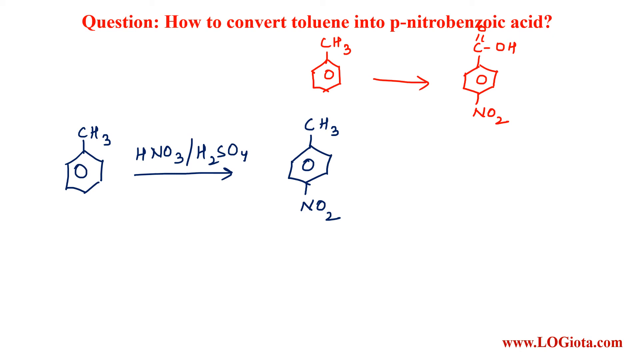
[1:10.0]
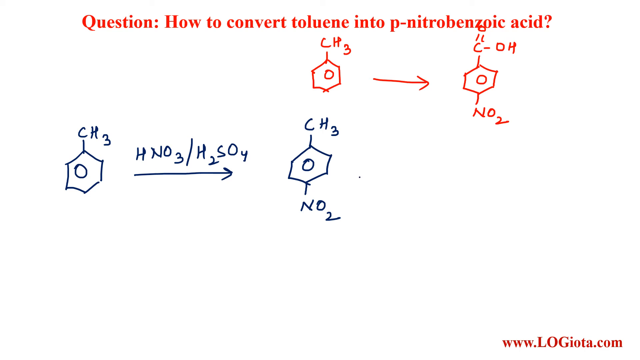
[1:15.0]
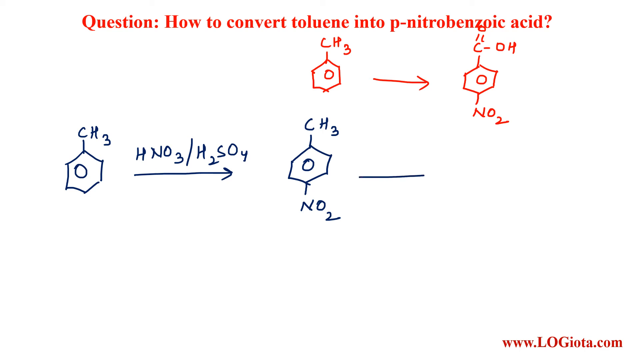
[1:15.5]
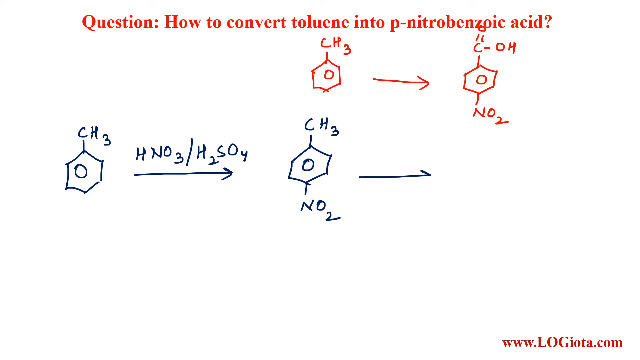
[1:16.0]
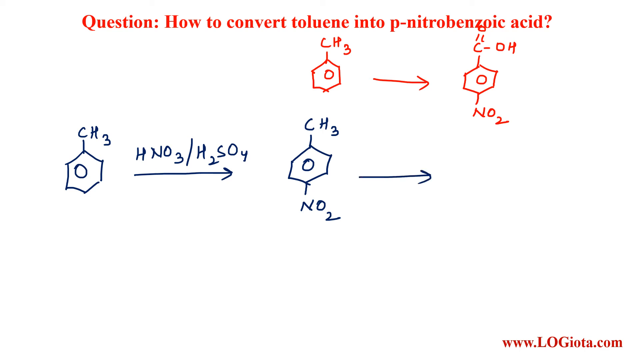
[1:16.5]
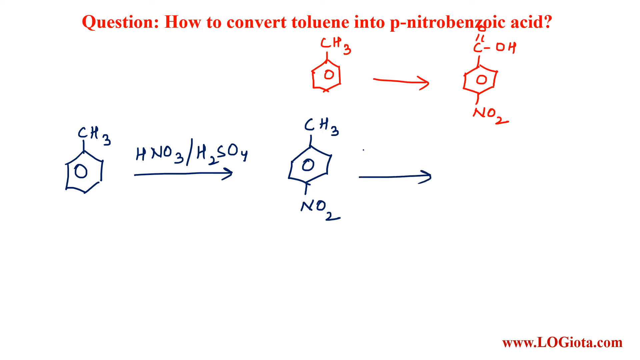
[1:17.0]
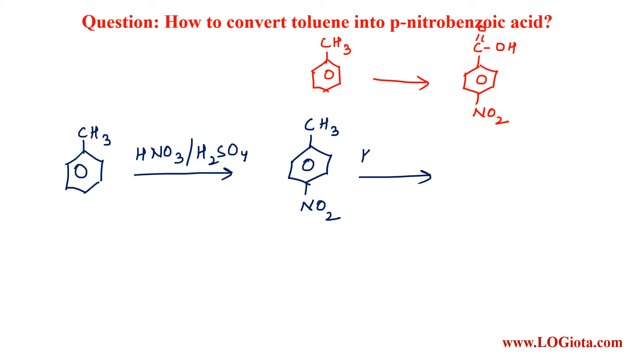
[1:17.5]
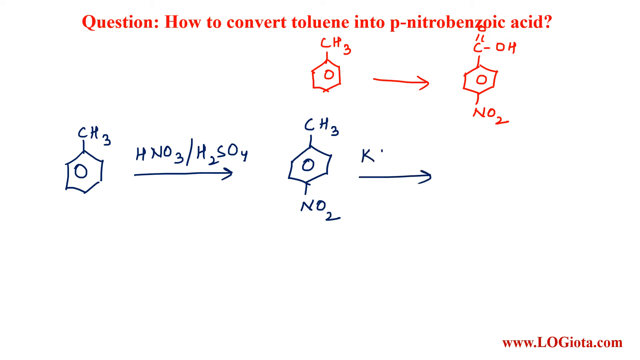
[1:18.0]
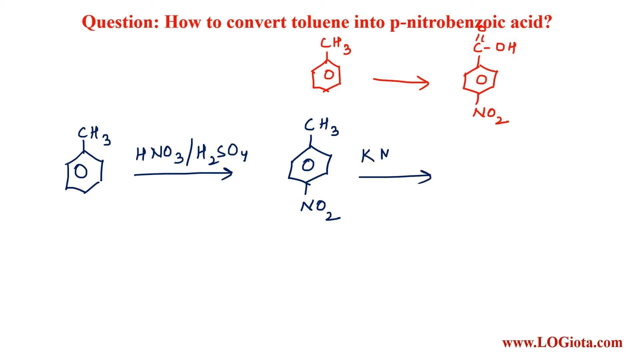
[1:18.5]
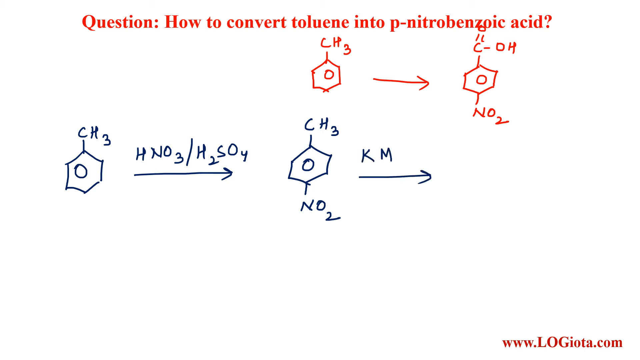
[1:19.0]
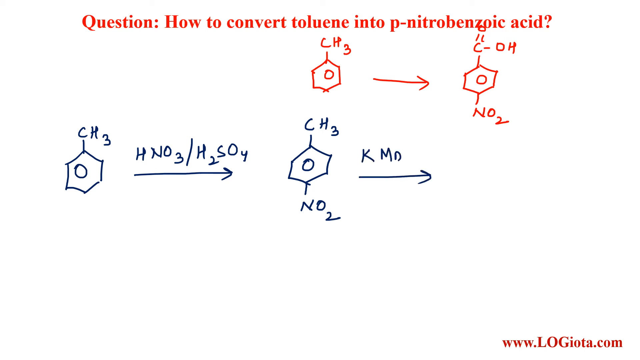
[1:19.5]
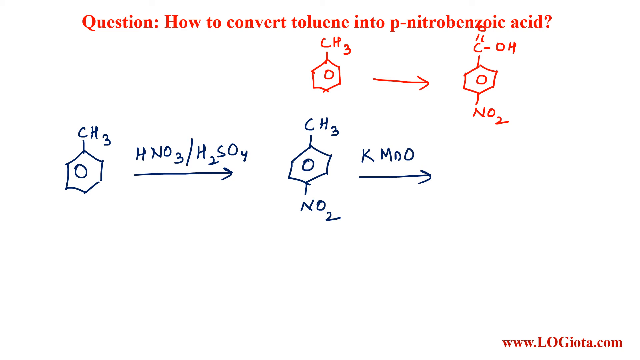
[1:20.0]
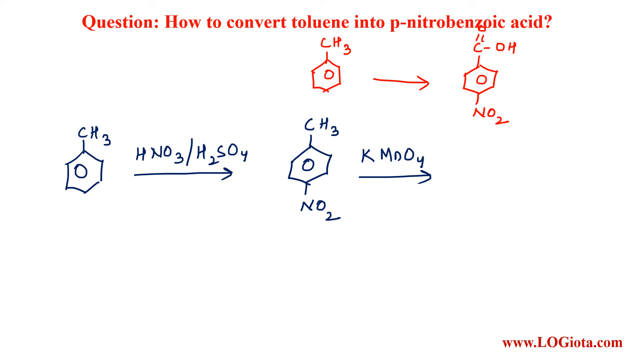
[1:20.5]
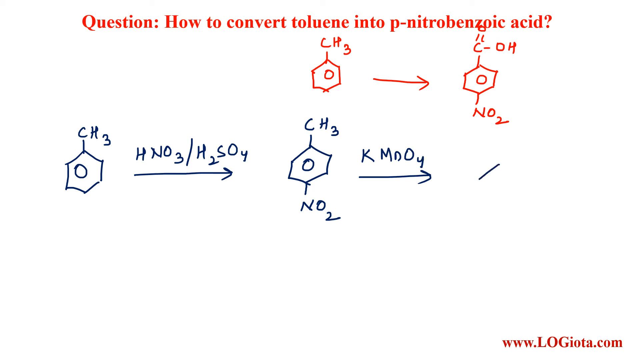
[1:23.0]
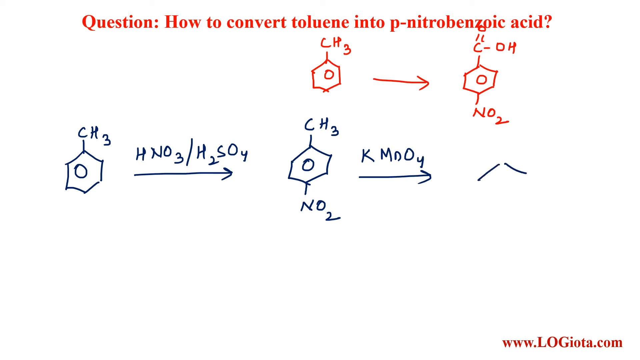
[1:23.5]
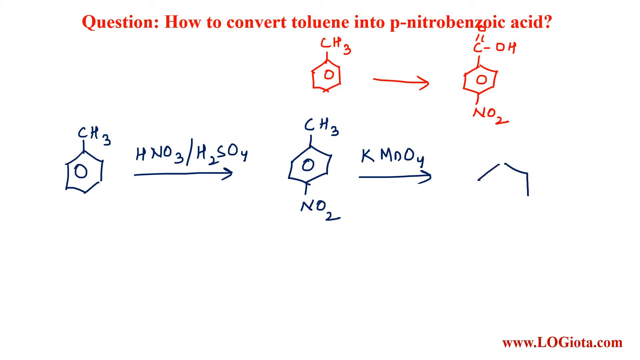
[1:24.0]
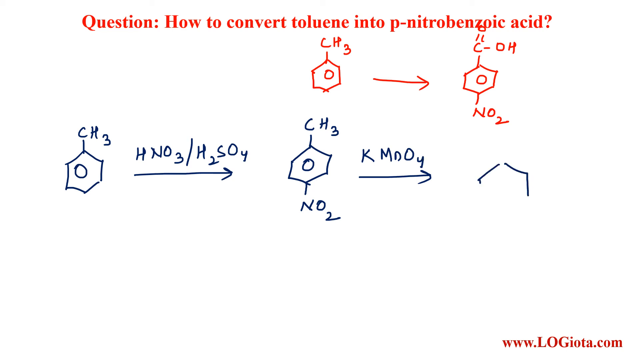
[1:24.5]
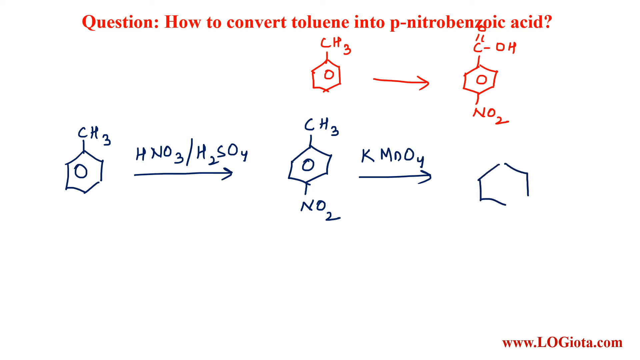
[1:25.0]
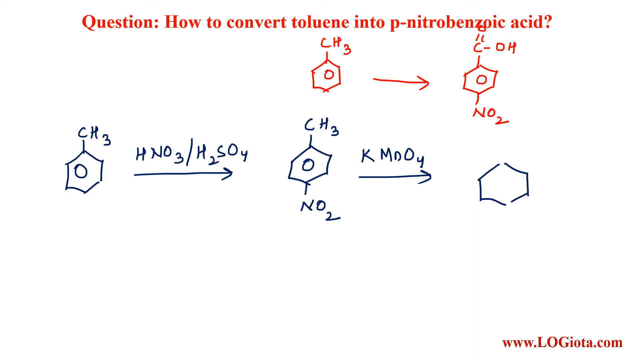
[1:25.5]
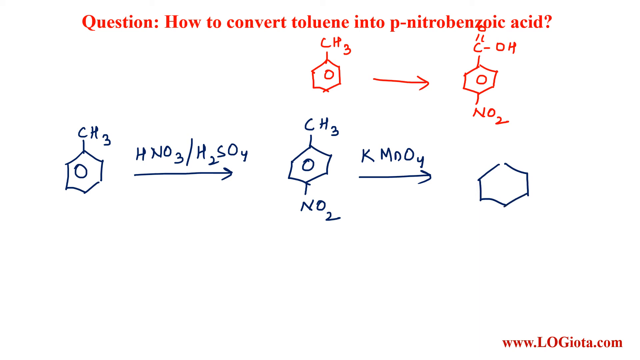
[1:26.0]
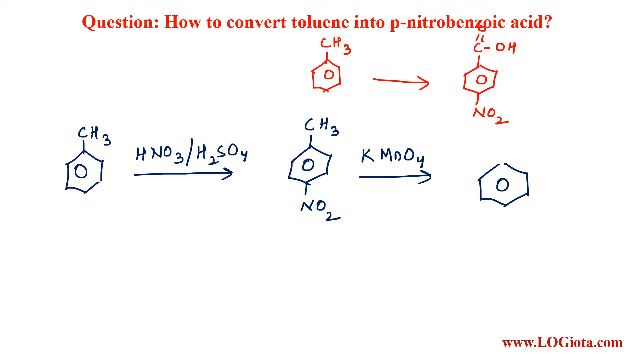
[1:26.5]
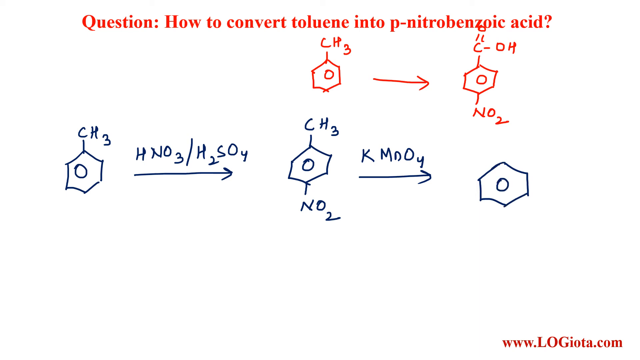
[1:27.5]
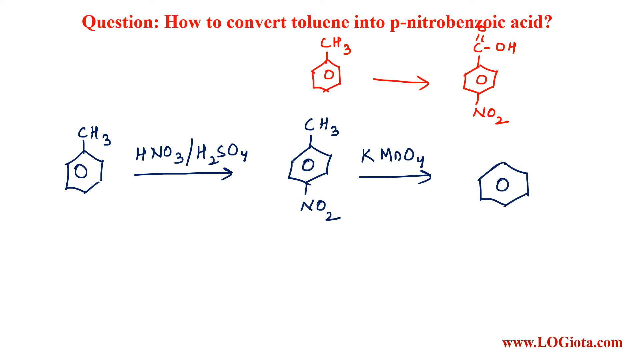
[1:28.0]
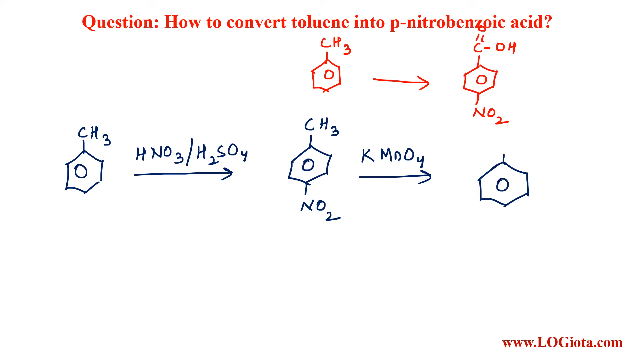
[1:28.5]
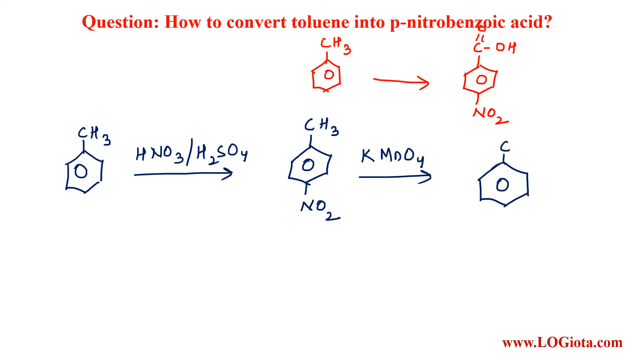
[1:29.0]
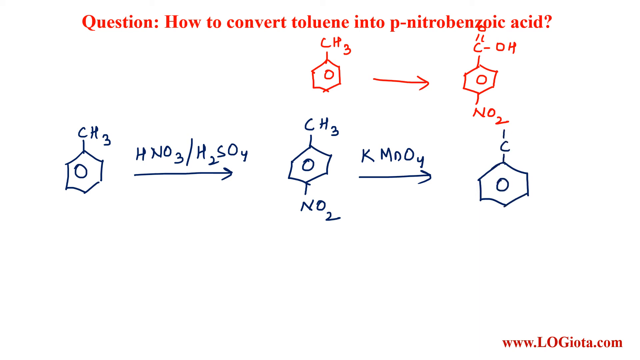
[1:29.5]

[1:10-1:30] For a while nothing much happens, with the drawn structures still on the screen. Then the instructor draws a line from the CH3 NO2 structure in the center of the screen: another line with an arrow pointing to the right, labeled apparently "KMOO4". The arrow points right to another structure they begin drawing, which also has an "O" in the center. This time they draw "HC" at the top, kind of similar to the orange structure at the upper right.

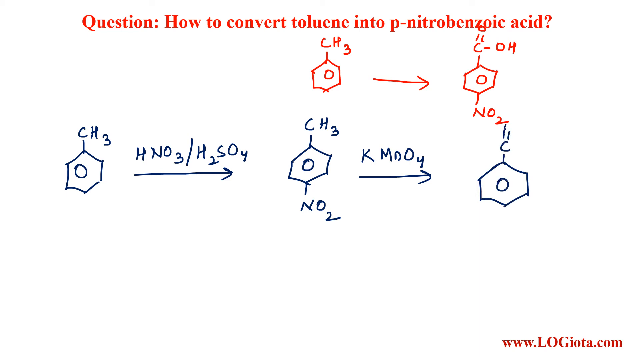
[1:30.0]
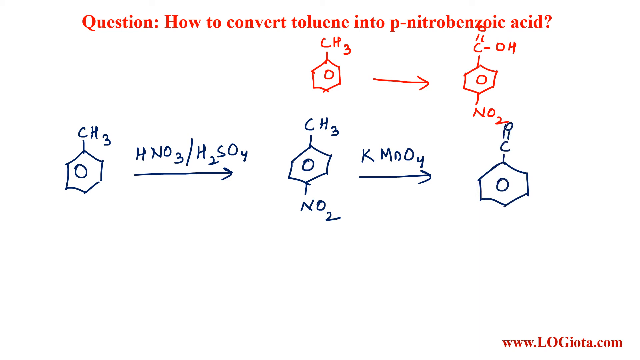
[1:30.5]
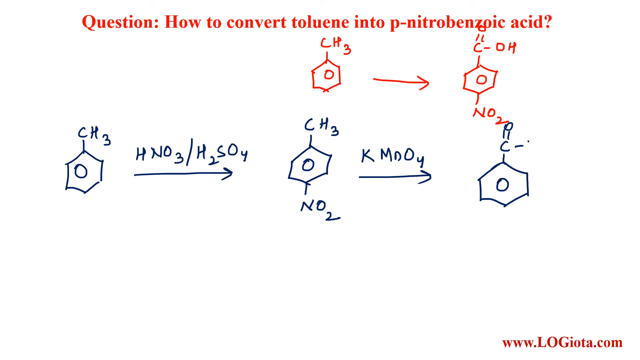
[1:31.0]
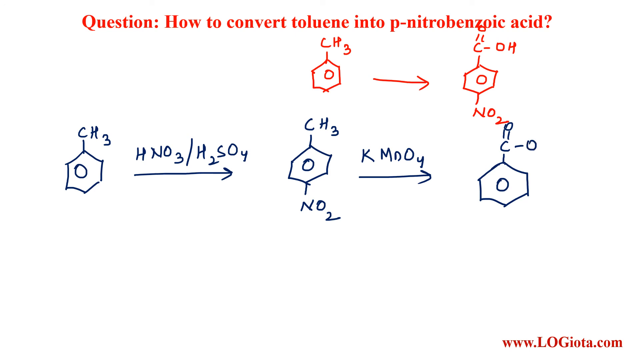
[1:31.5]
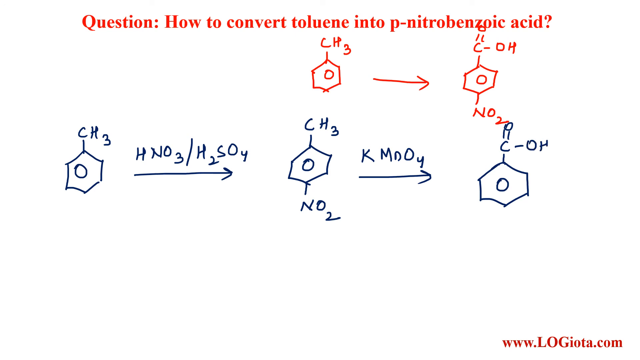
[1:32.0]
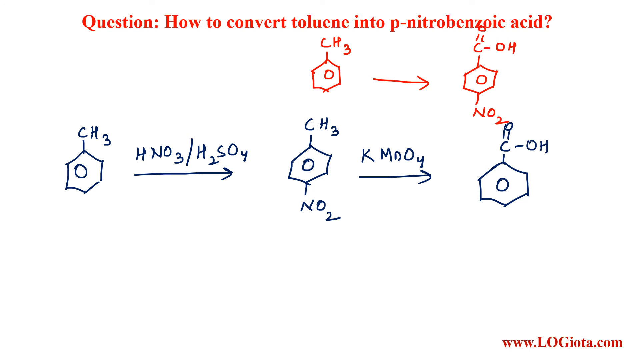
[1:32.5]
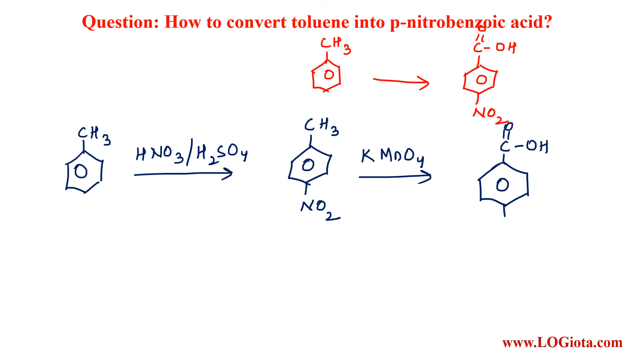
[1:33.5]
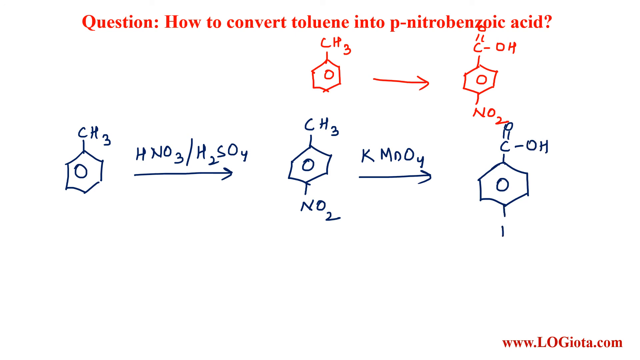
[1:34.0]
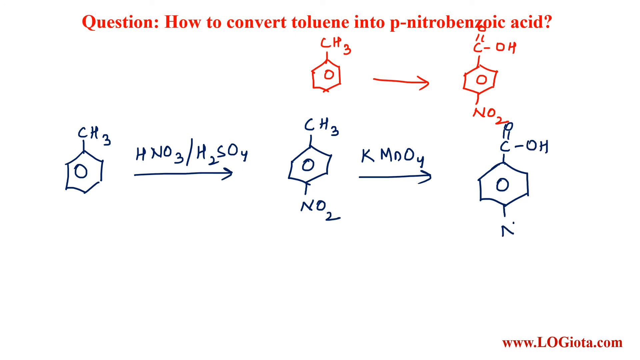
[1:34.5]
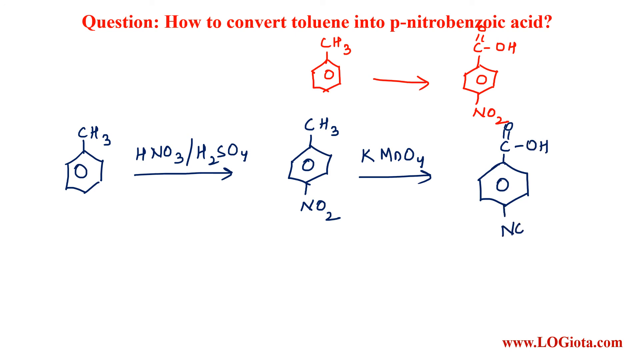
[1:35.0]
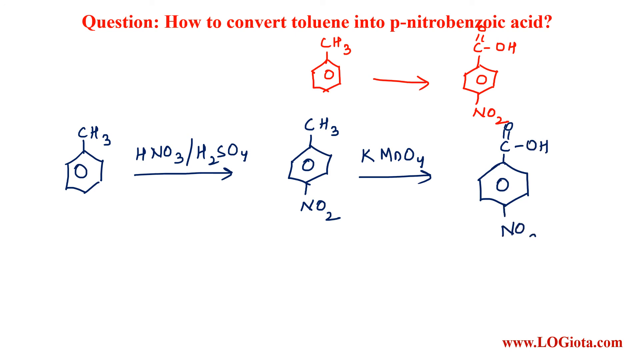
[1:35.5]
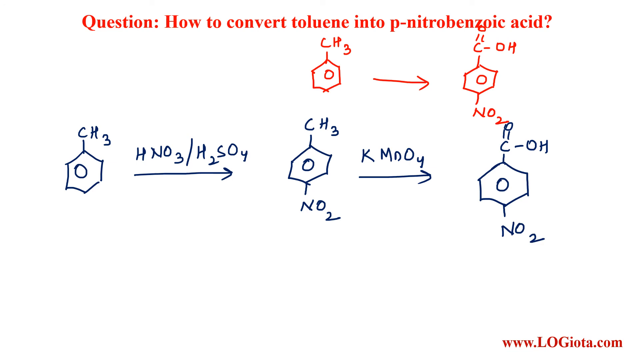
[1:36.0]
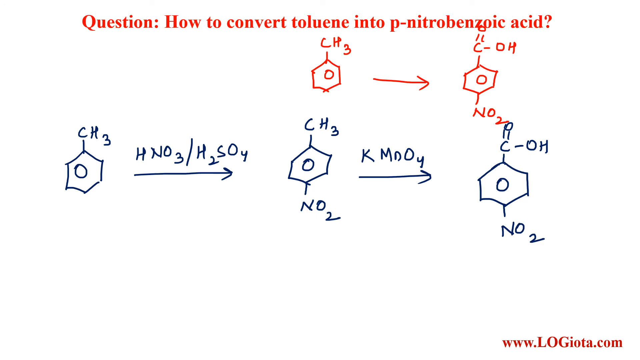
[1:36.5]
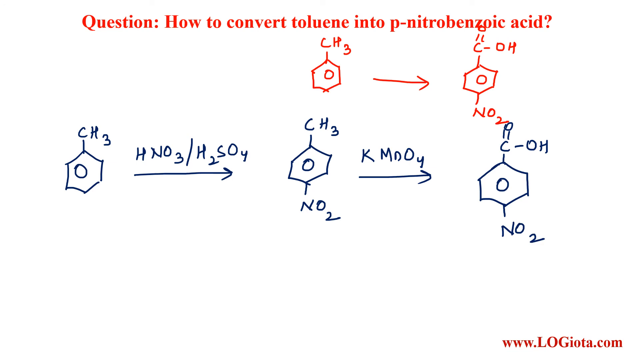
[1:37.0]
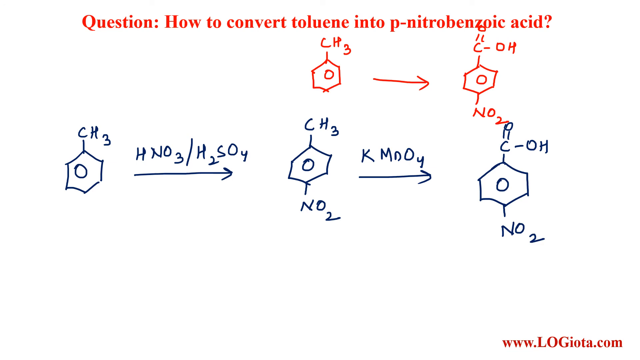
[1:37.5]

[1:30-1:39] The instructor continues drawing the "HC", then adds a dash and "OH". At the bottom of this structure they draw "NO2". This final structure is apparently the result of the conversion and the answer to the question.